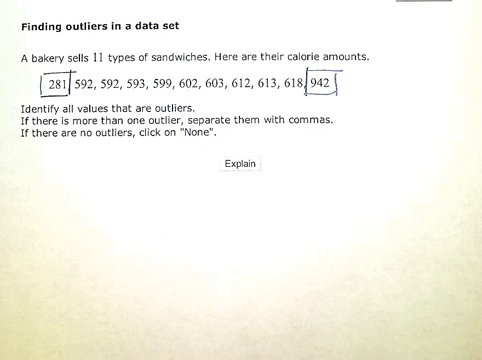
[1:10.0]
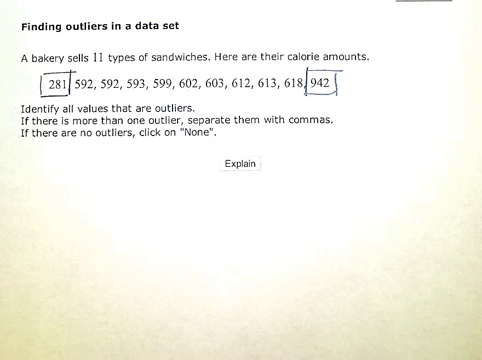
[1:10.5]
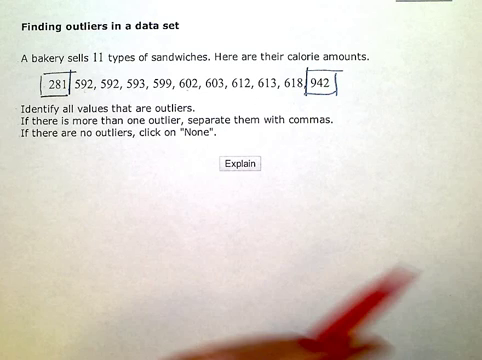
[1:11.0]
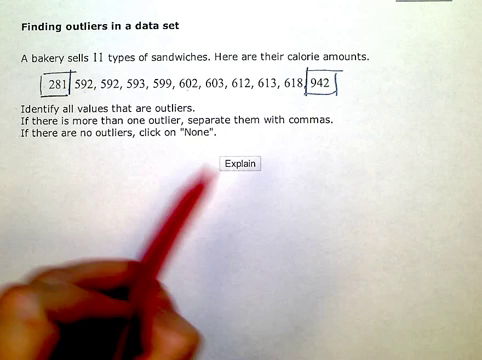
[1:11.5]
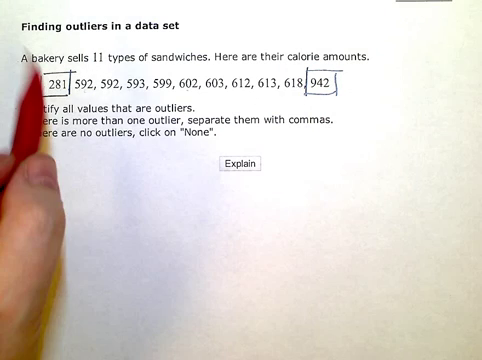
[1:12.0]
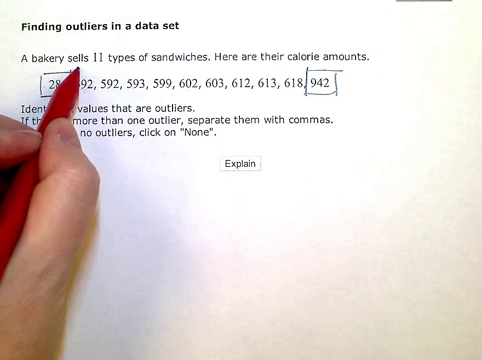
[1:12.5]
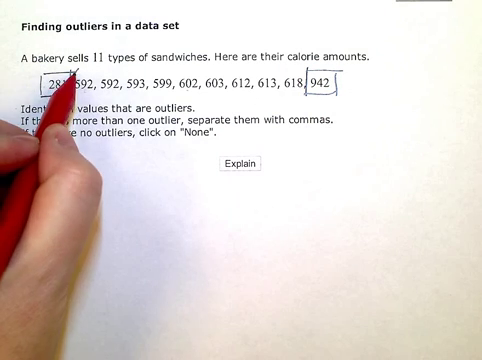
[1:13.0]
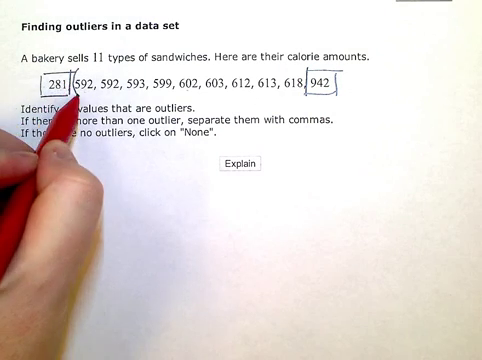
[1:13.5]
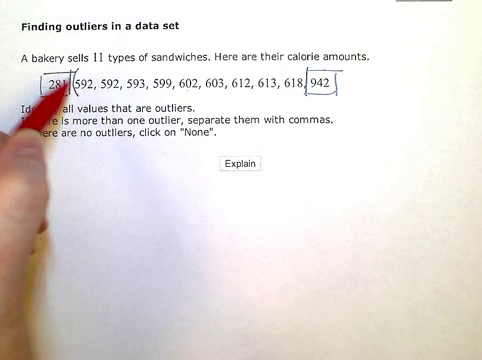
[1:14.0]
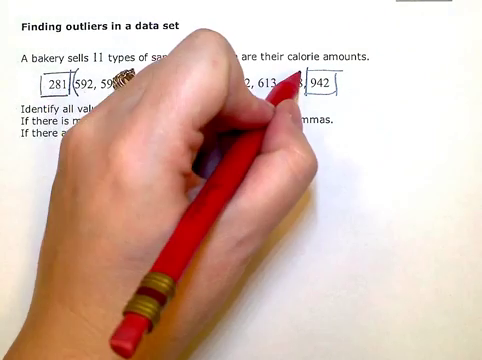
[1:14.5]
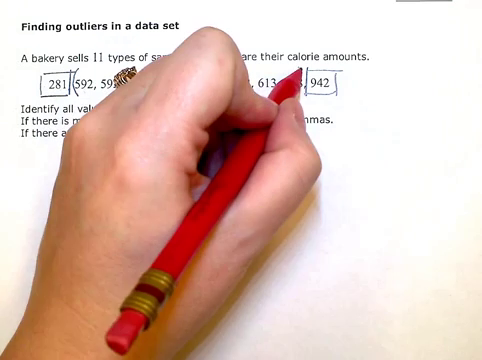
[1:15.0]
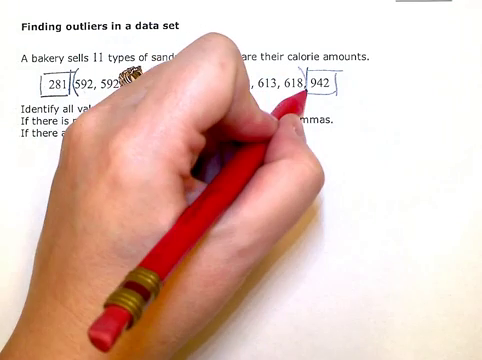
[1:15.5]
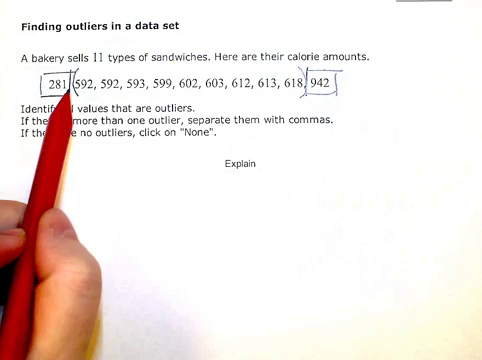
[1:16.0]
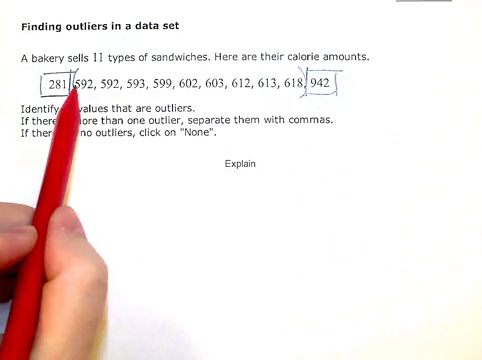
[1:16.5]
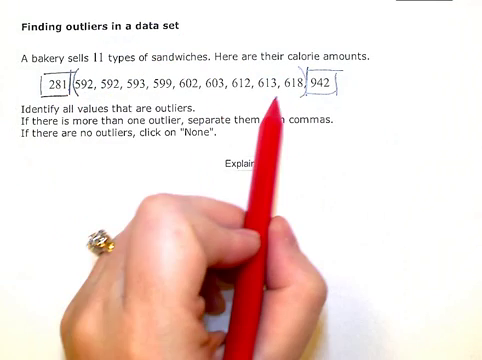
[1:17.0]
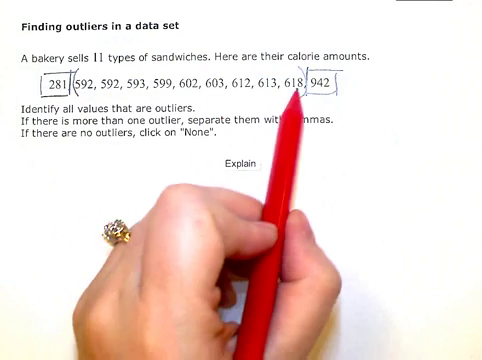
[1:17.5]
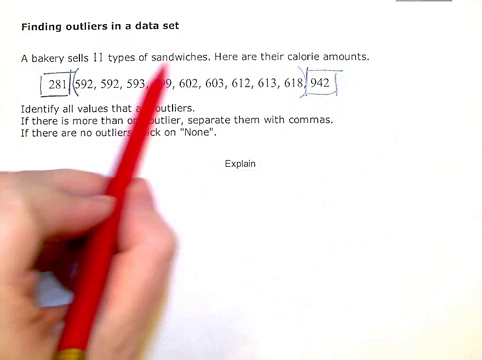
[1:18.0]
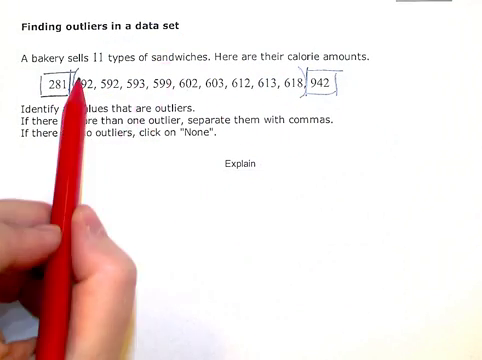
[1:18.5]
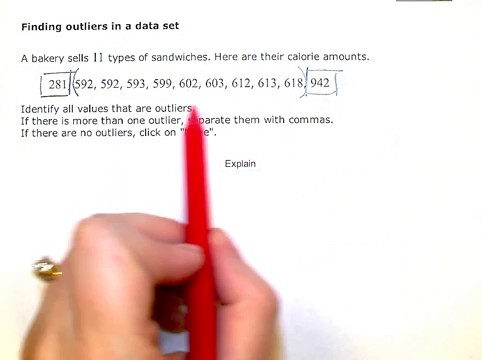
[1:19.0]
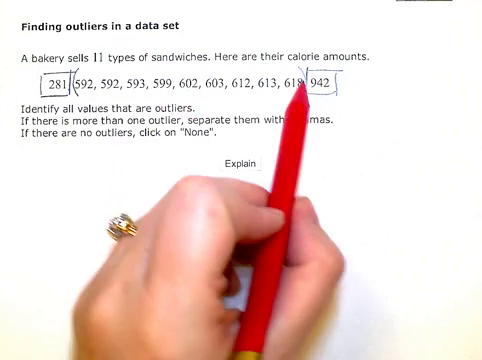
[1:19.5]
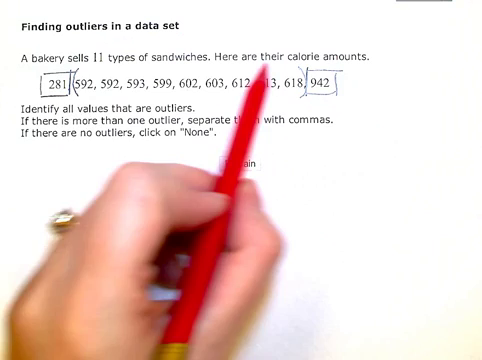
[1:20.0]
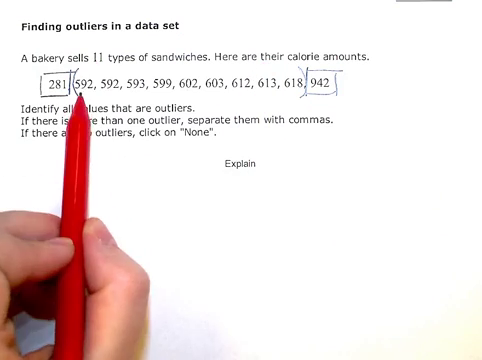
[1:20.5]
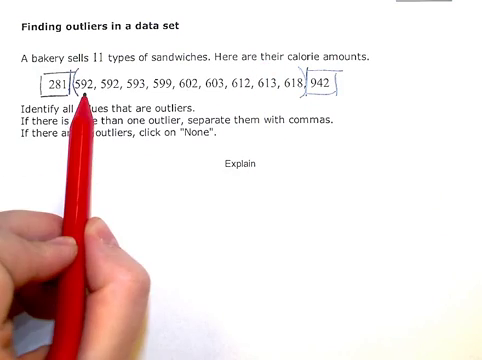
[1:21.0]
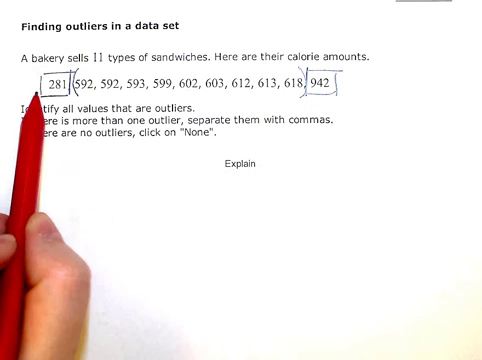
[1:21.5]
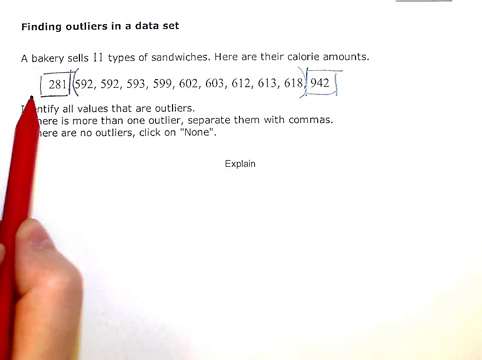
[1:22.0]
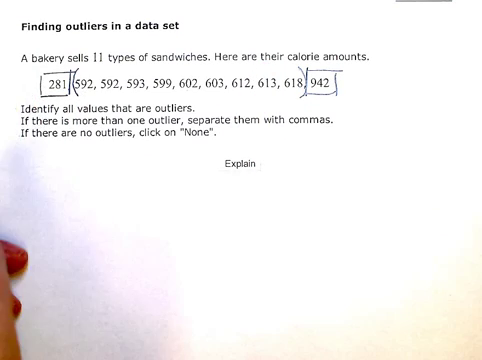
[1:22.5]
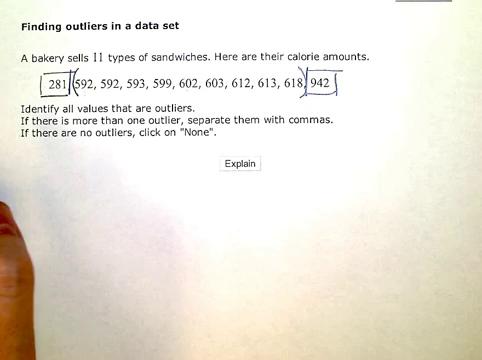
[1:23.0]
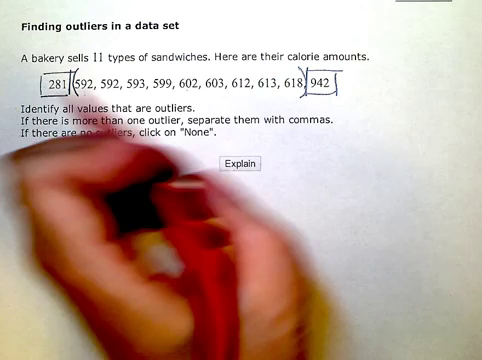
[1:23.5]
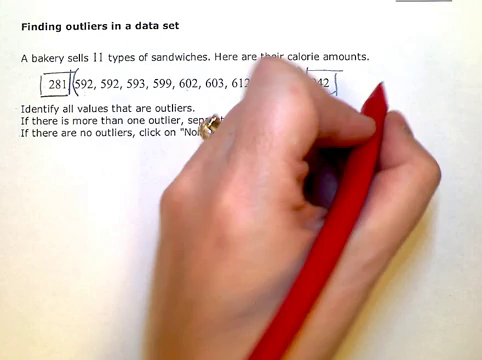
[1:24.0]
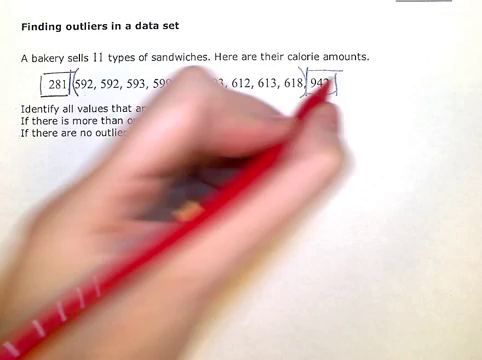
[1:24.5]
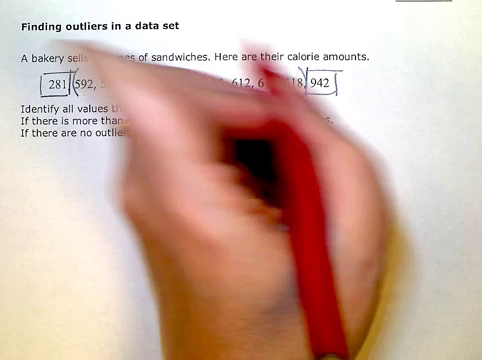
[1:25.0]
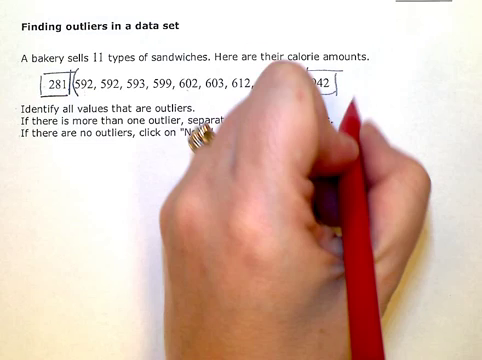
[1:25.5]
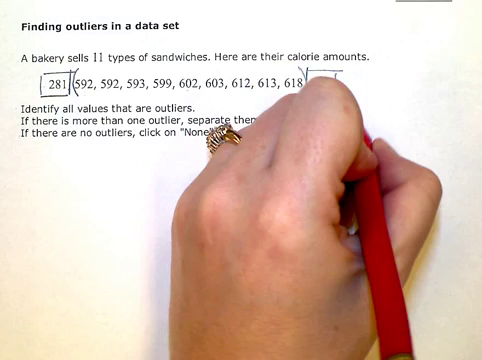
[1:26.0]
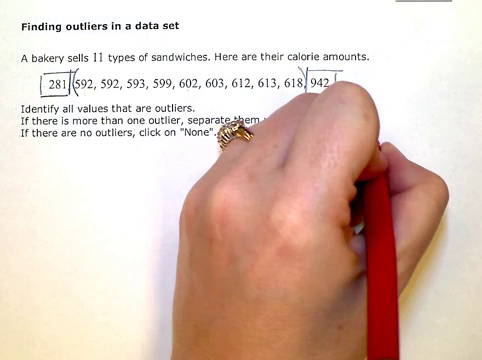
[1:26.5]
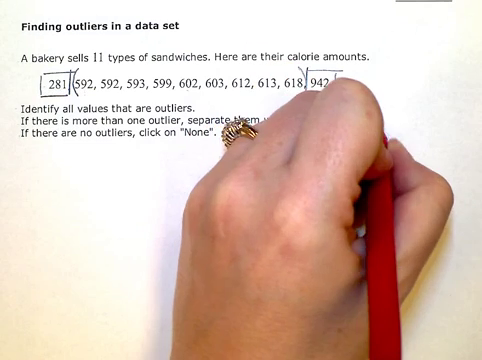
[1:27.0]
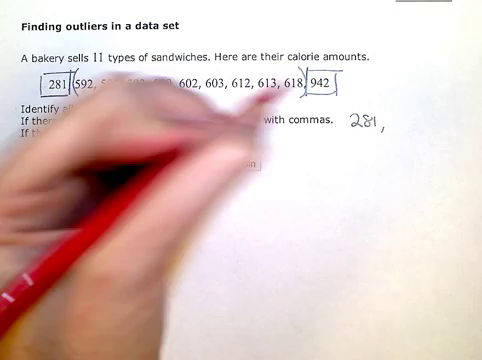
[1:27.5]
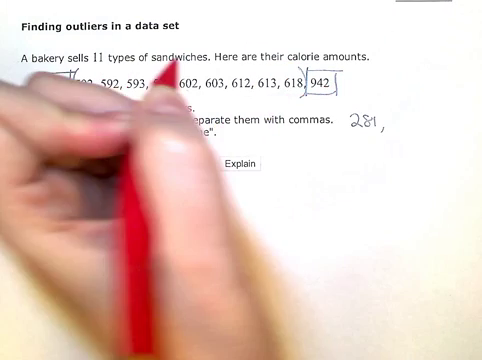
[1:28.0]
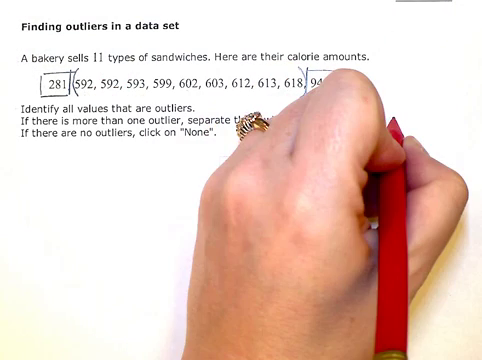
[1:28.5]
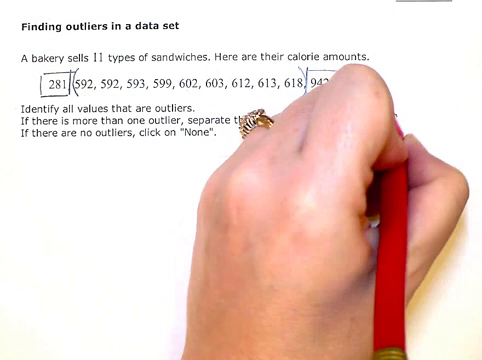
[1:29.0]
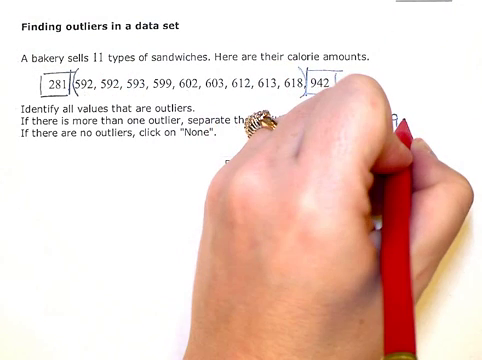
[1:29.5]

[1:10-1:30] There are many hand movements. Boxes are shown around the initial and final numbers in the number line. The hand sweeps from the bottom in an arc up toward the question. The pen is now held in a normal grip between the first finger, index finger and thumb, and is used to write on the question: first brackets are put around the rest of the numbers as the hand moves to the various positions. The pen is then used as a pointer, pointing to each of the numbers in the line. A large diamond ring is clearly visible on the ring finger of the left hand. The hand moves several times to the left and right, showing the different numbers in a range between the brackets. The hand then sweeps across the page again from the left to the end of the number line, where the number 281 is written. The pen is still held as a normal pen, but then the hand turns so that the thumb is upward and the pen points to the word "sandwiches." The hand then appears to erase the number that was just written.